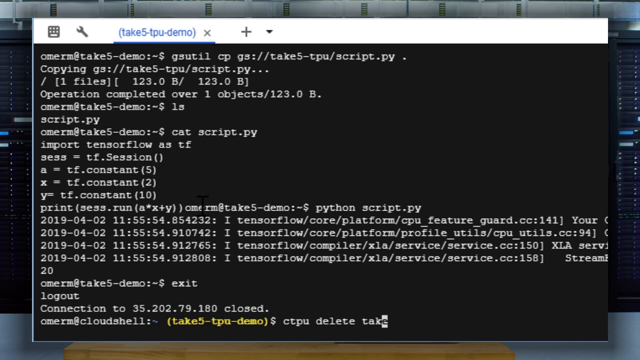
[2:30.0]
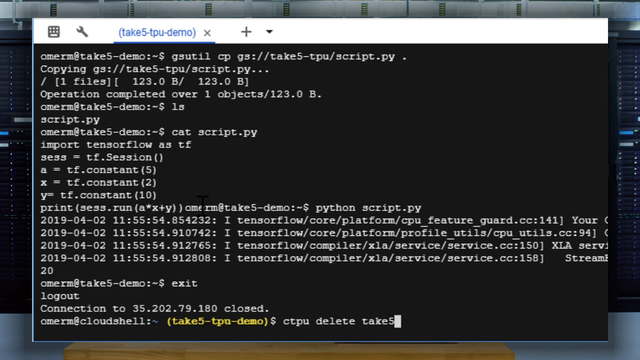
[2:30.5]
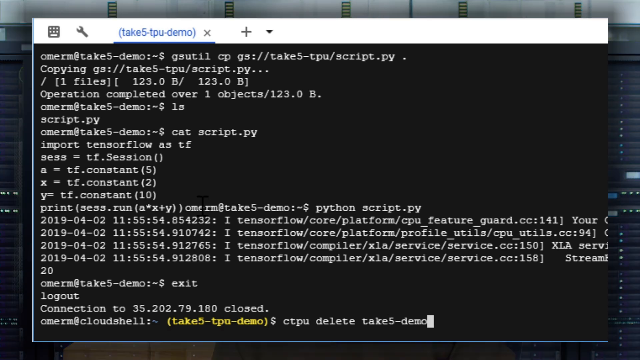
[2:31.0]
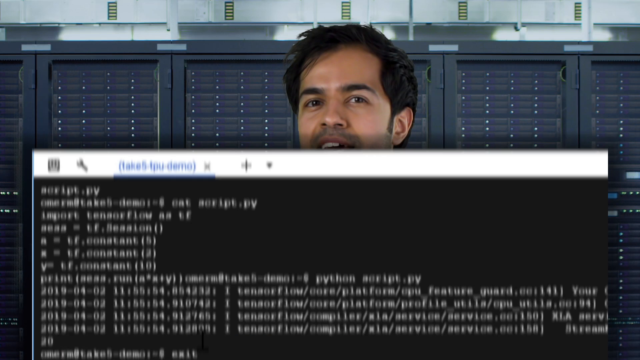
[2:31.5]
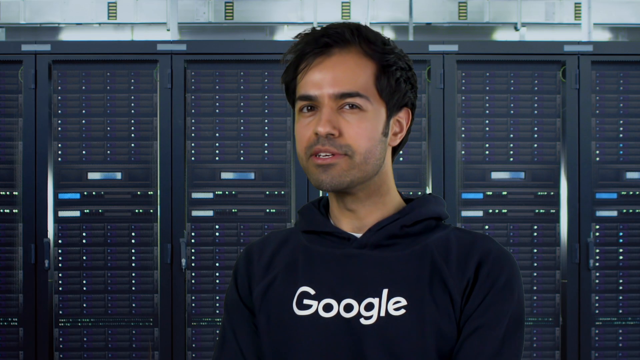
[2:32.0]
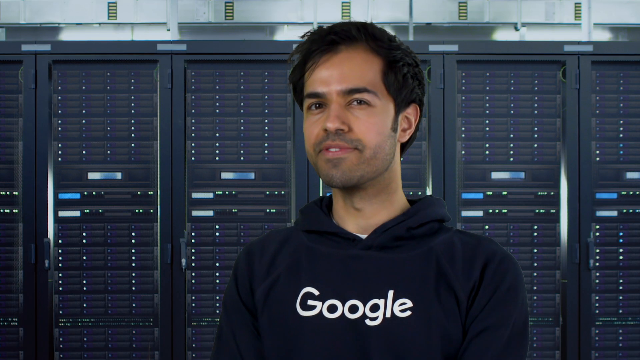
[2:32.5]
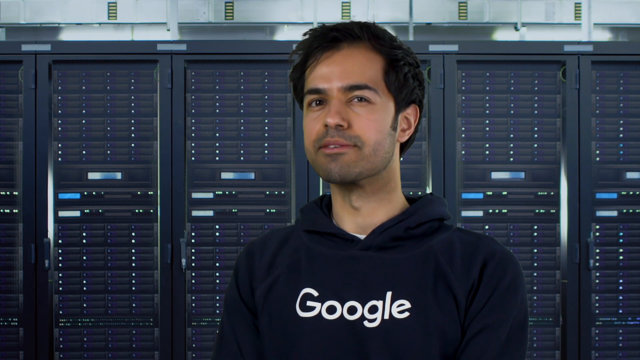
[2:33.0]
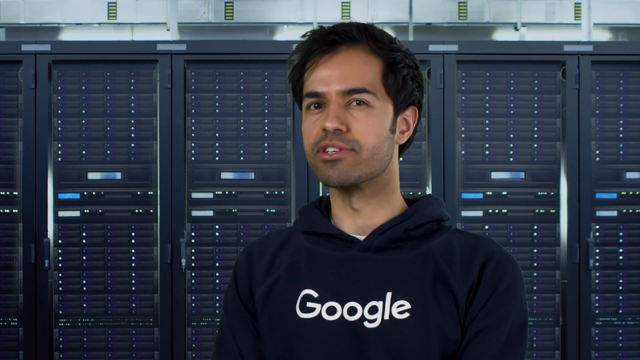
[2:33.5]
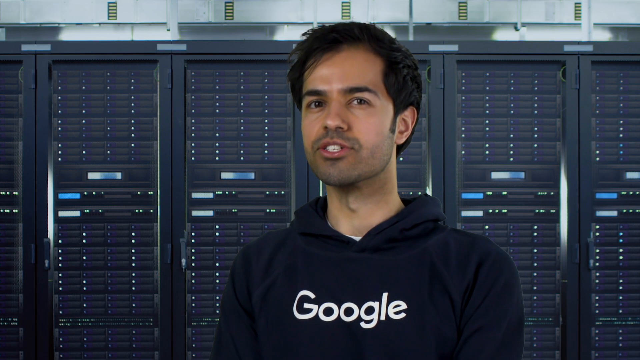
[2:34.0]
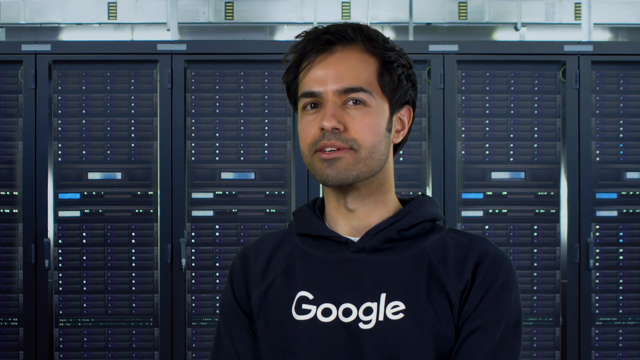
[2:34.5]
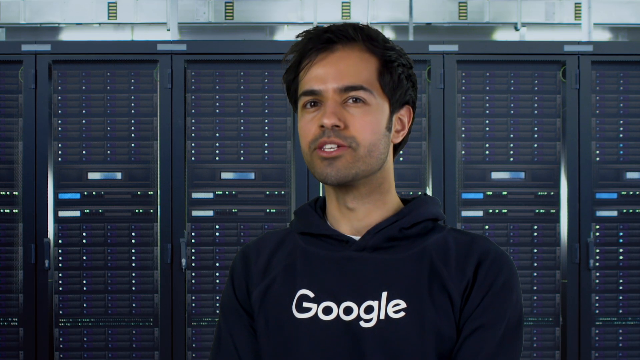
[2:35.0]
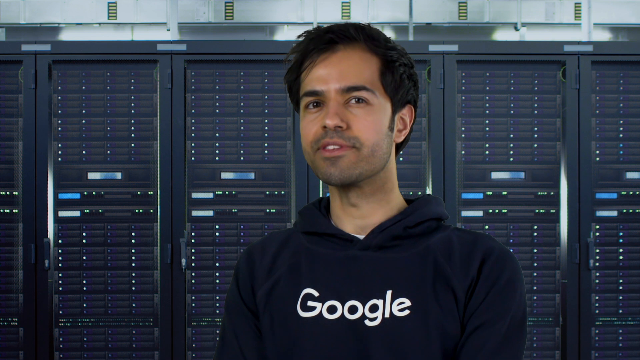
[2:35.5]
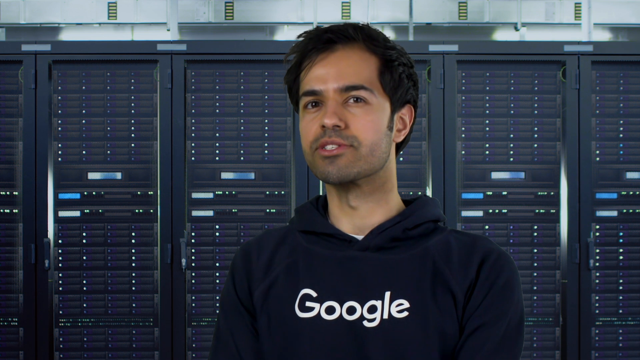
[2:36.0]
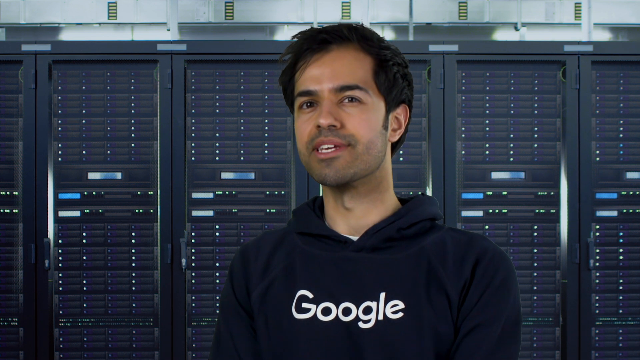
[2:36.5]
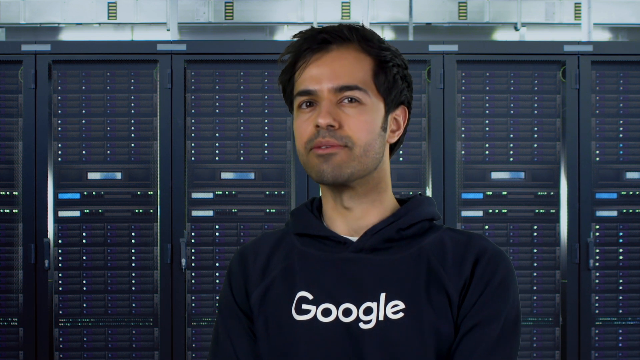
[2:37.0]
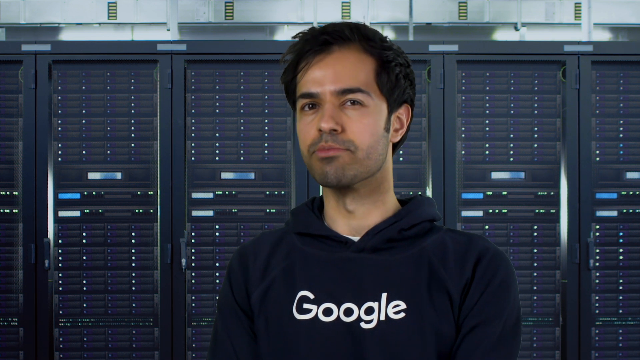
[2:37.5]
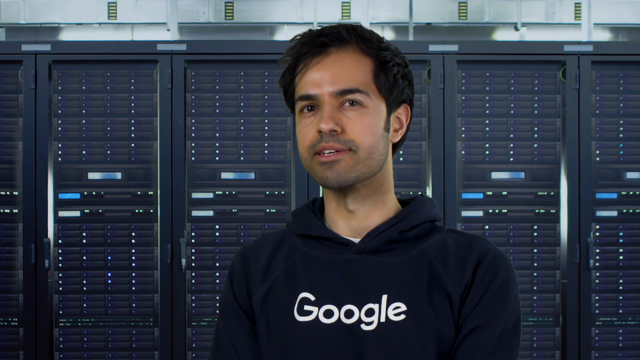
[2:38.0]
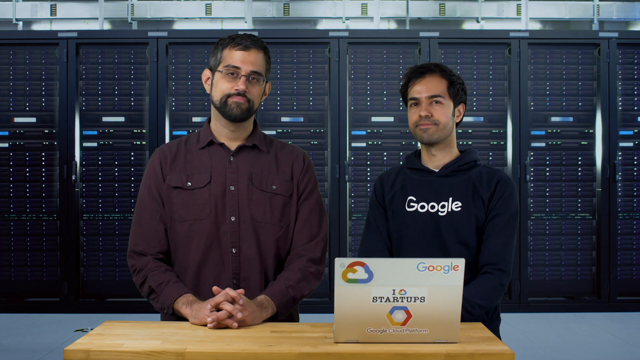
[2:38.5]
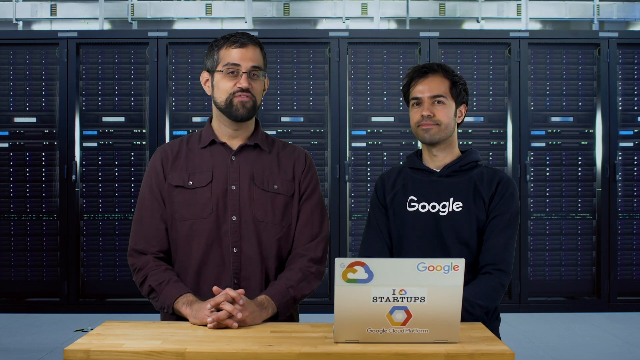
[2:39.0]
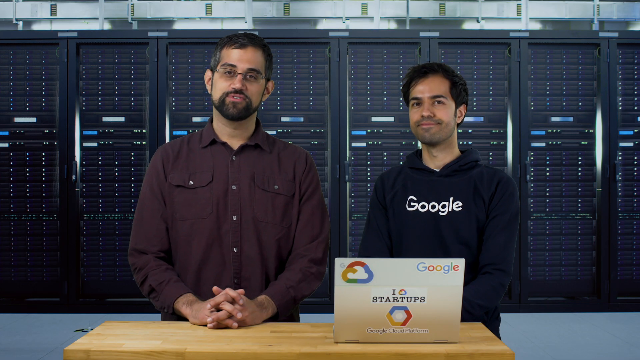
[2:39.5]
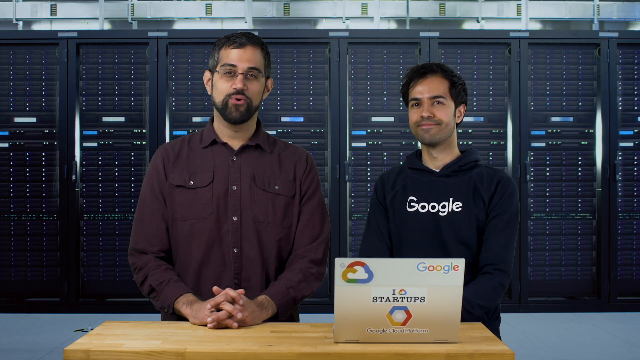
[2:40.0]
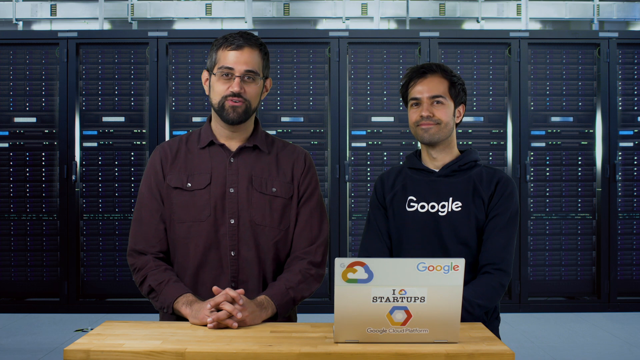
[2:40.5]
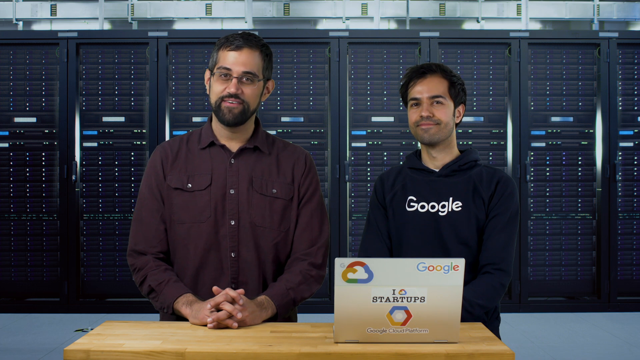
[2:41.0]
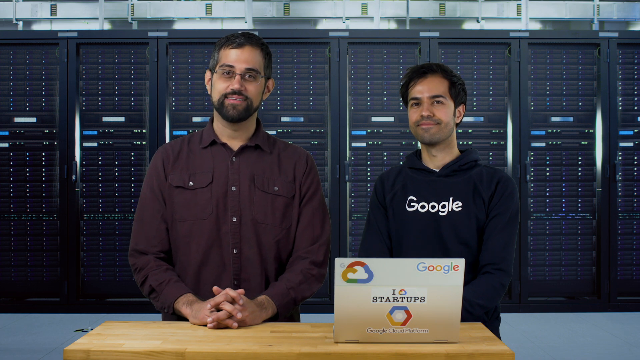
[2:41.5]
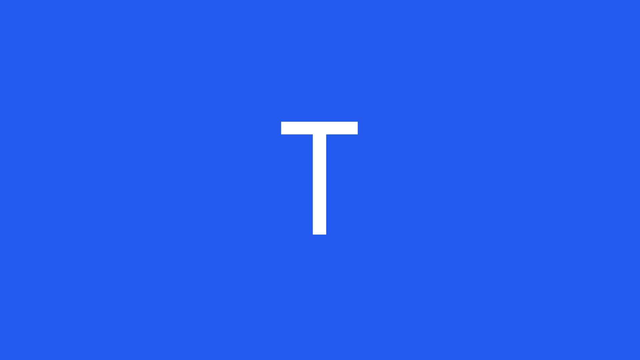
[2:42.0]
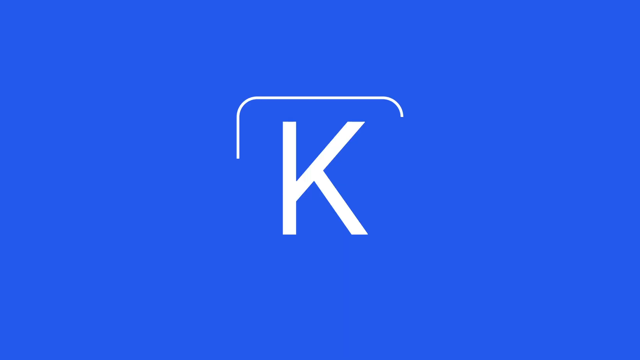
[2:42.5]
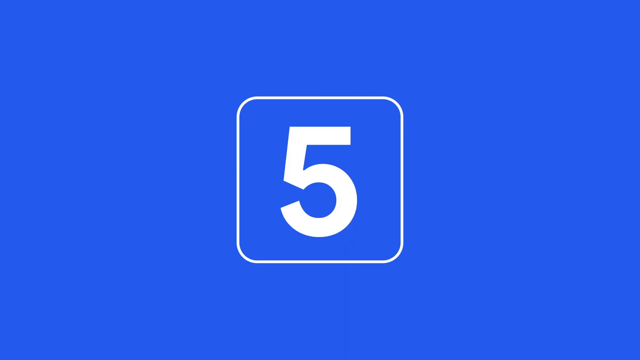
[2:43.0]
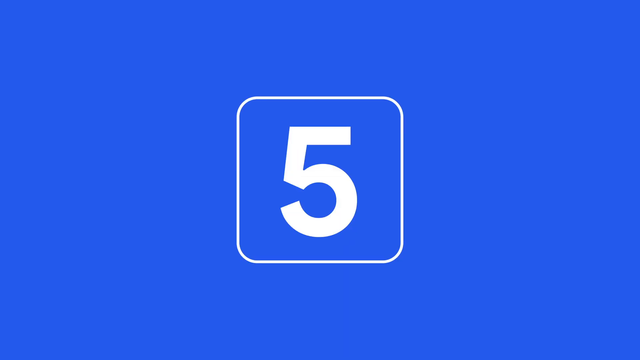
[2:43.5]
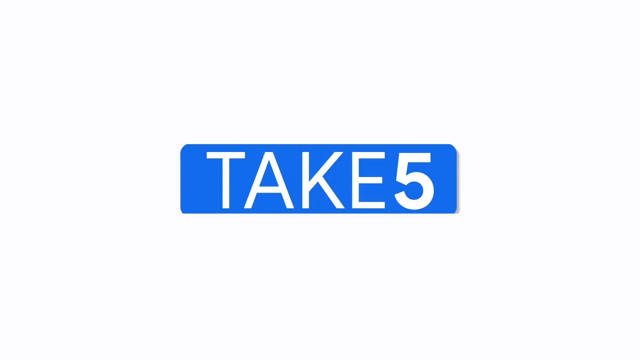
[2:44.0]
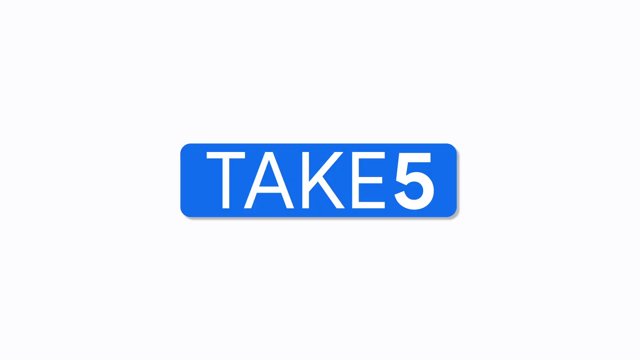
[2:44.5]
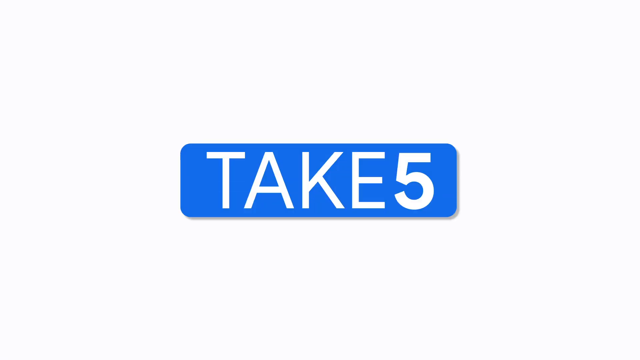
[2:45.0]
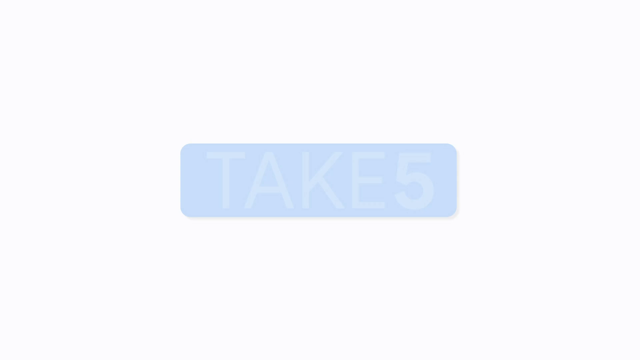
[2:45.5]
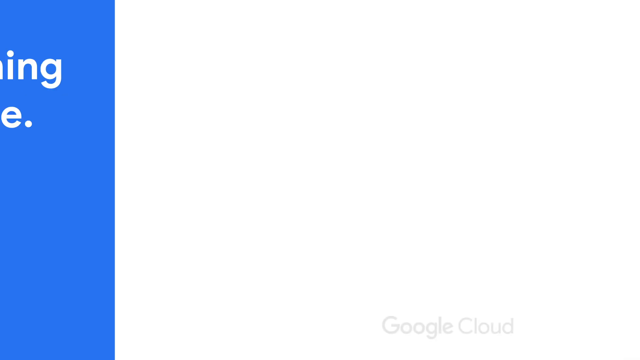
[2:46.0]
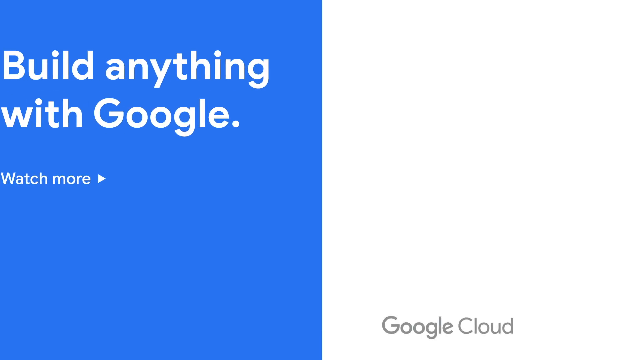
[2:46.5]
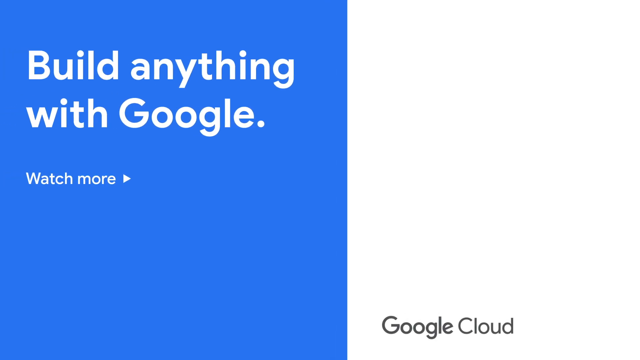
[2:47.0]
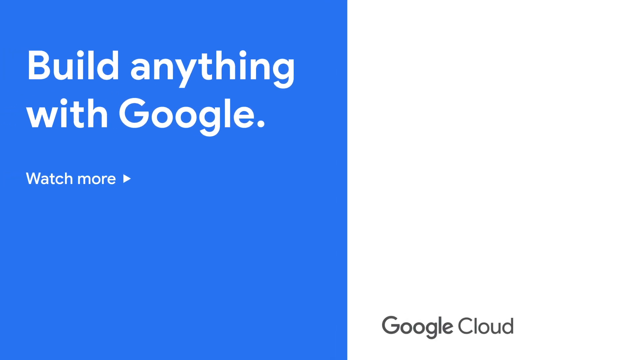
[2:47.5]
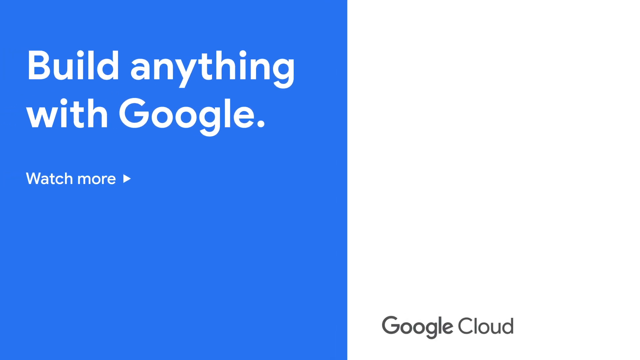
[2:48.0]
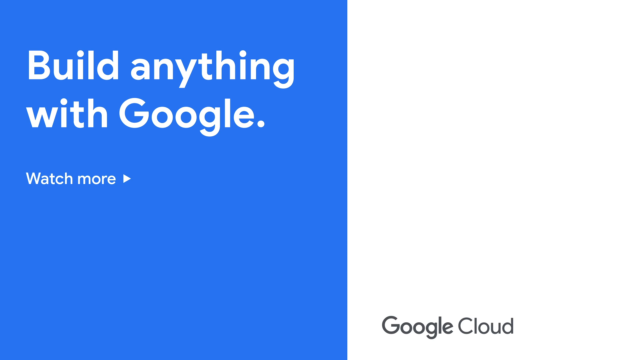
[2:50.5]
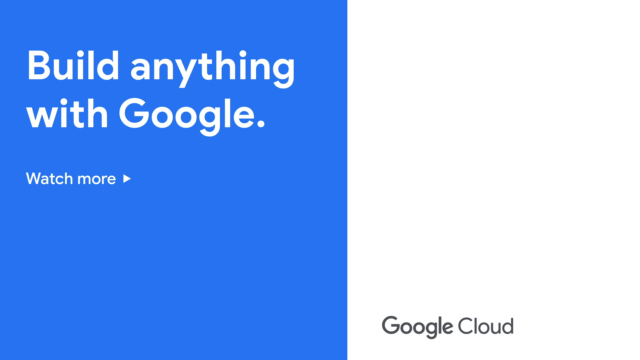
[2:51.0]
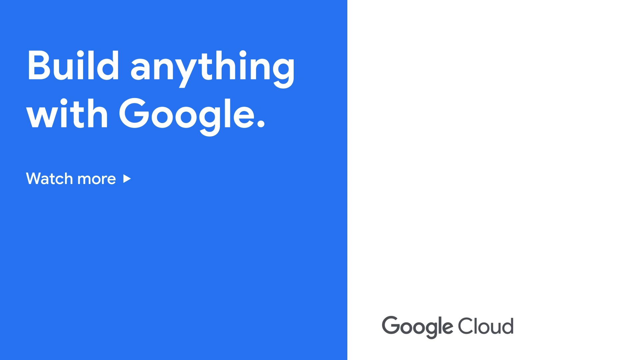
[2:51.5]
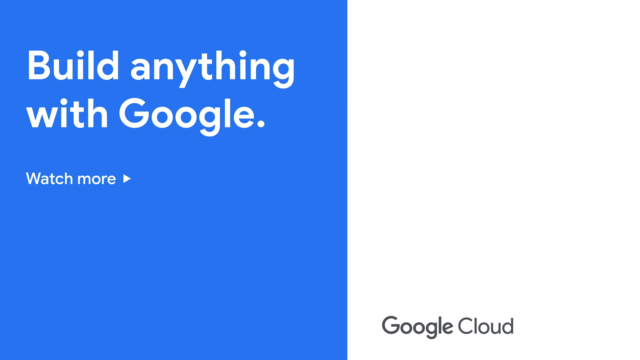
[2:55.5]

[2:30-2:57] The workspace window is opened and more data is input, and then it seems to exit the demo. The man in the Google hoodie, who looks to possibly be of Indian descent, talks, seemingly staring at the camera and motioning slightly with his head. The person on the left has his hands folded, fingers over each other, and speaks. Then "take five" appears, followed by "build anything with Google," which seems like a presentation outline, with "watch more" underneath, in the blue section. At the bottom on the right-hand side, in the white area, it says "Google Cloud." This appears to possibly be the end graphic of the presentation.